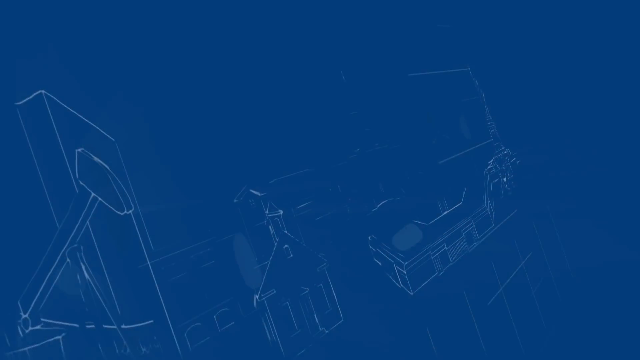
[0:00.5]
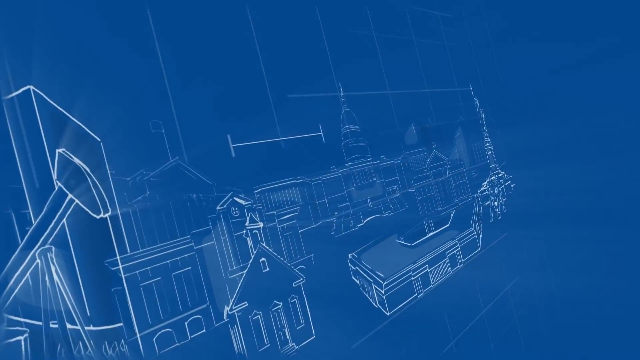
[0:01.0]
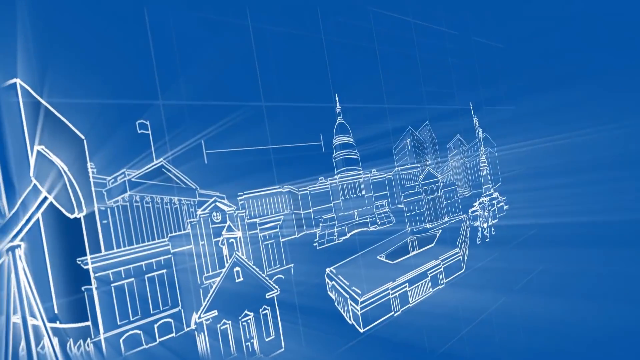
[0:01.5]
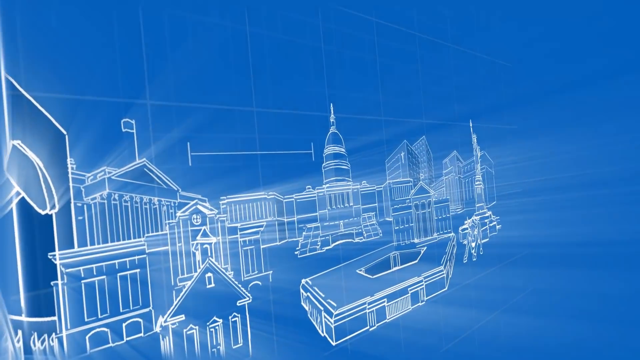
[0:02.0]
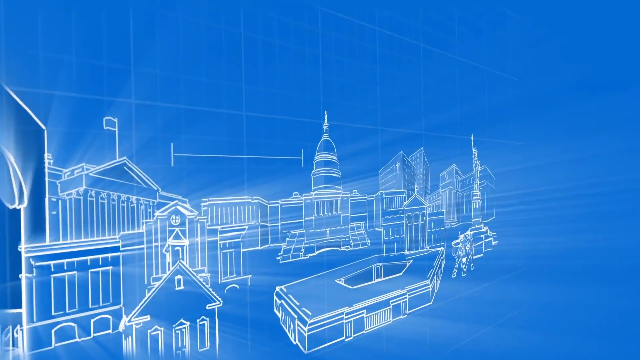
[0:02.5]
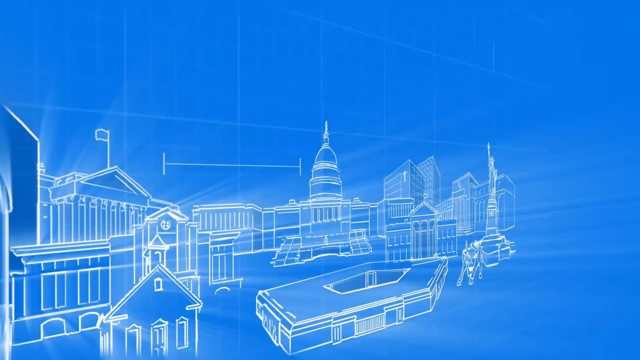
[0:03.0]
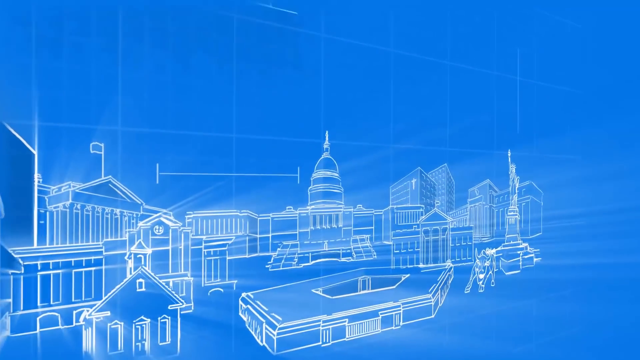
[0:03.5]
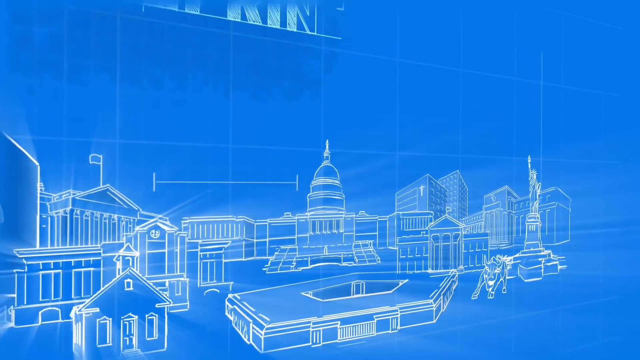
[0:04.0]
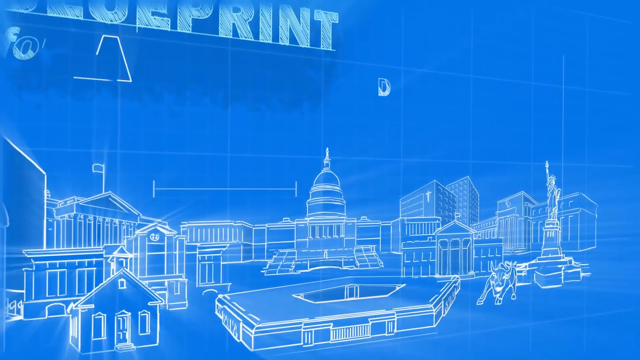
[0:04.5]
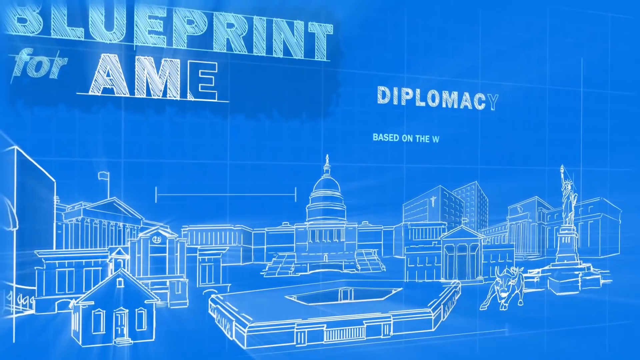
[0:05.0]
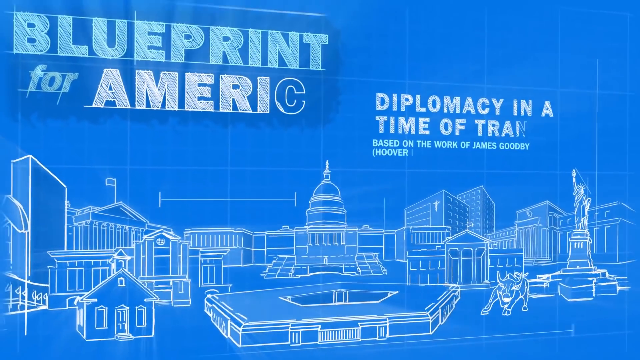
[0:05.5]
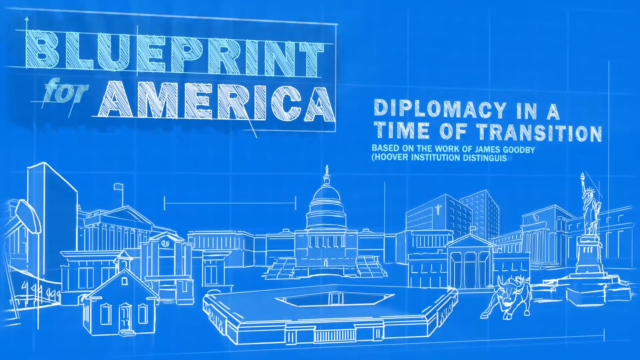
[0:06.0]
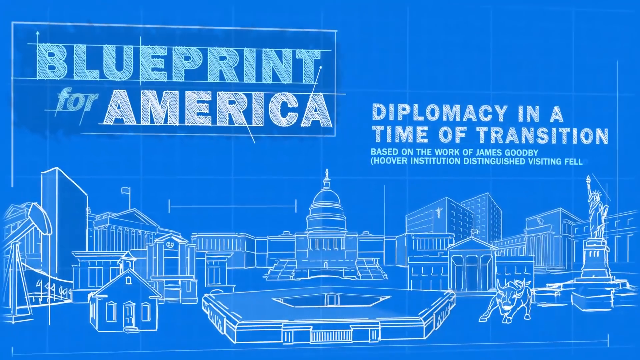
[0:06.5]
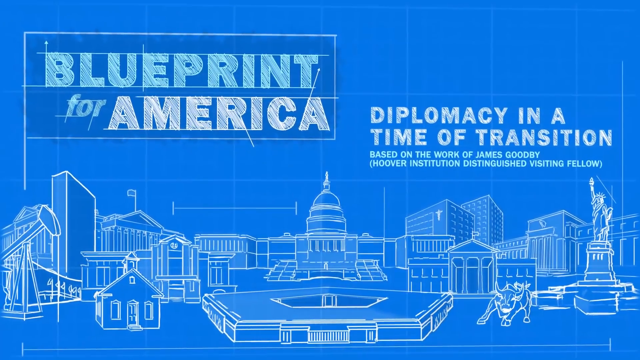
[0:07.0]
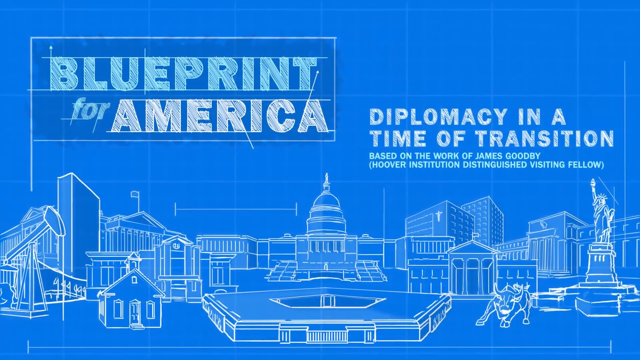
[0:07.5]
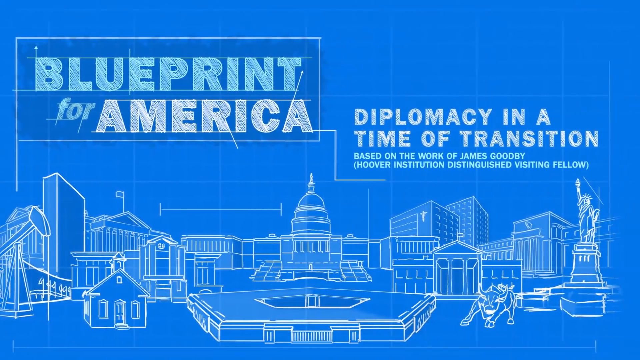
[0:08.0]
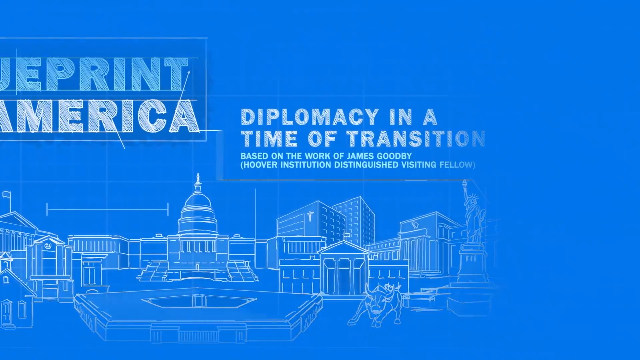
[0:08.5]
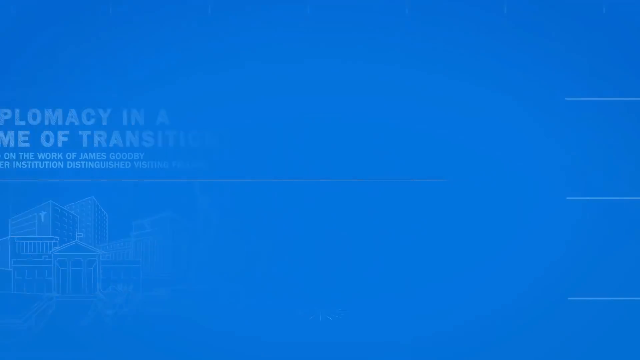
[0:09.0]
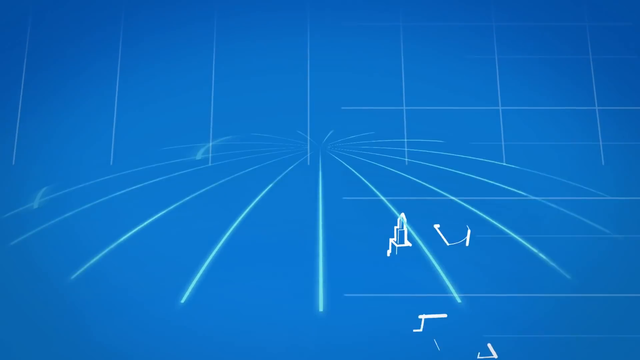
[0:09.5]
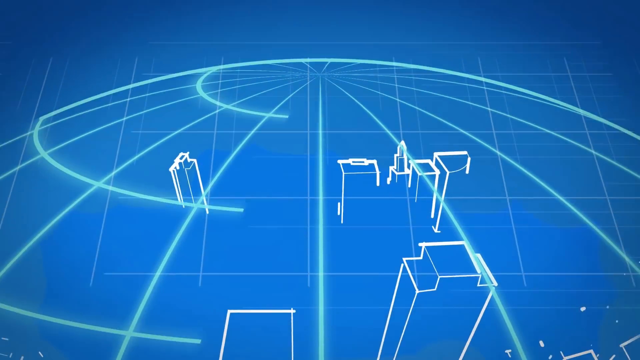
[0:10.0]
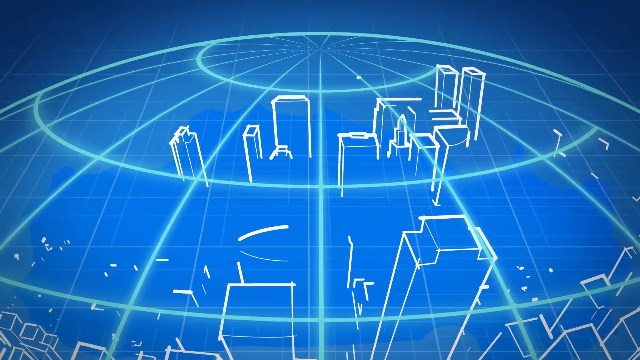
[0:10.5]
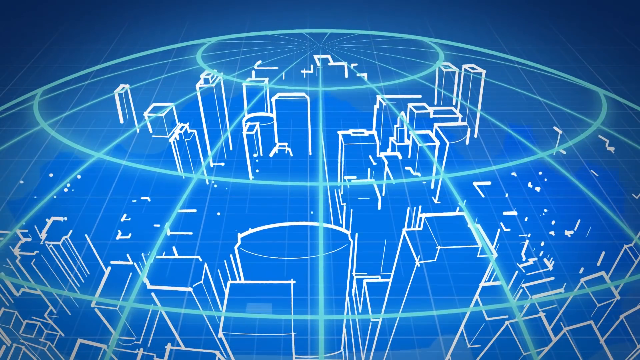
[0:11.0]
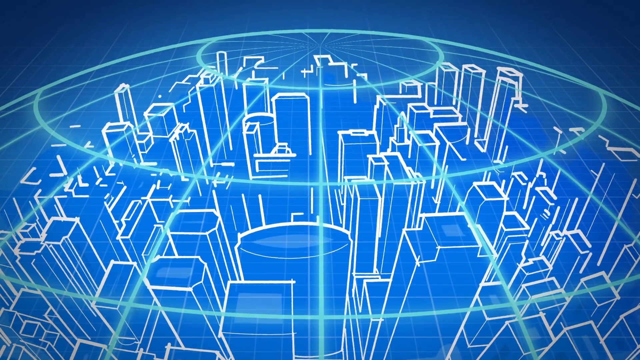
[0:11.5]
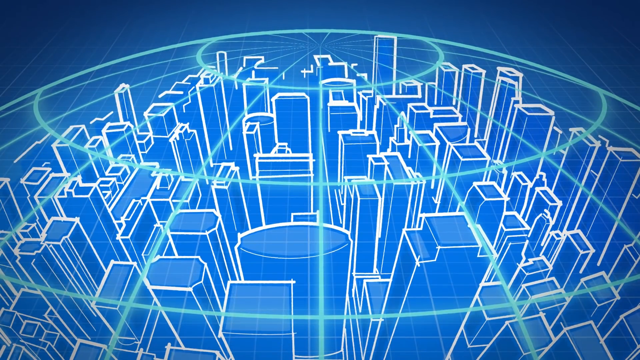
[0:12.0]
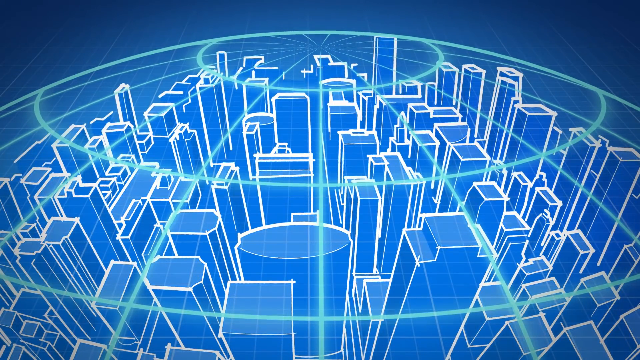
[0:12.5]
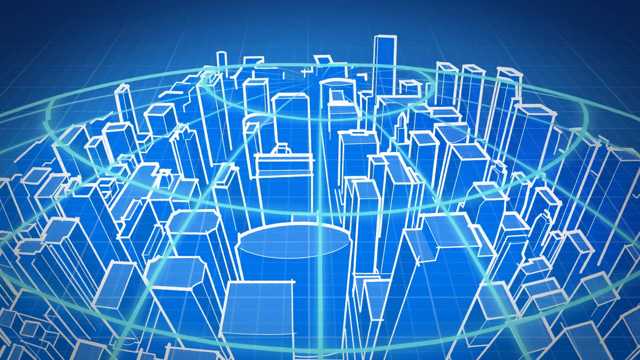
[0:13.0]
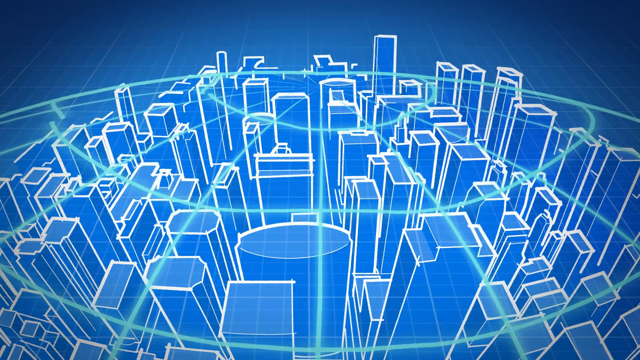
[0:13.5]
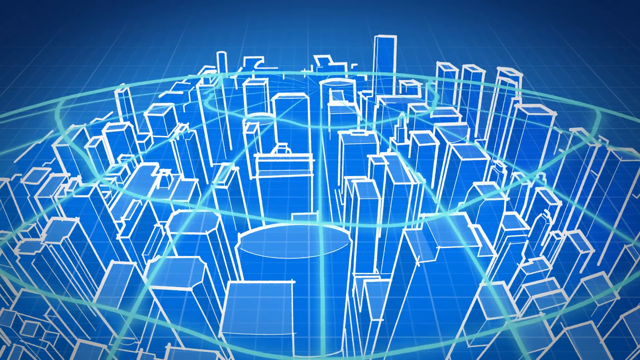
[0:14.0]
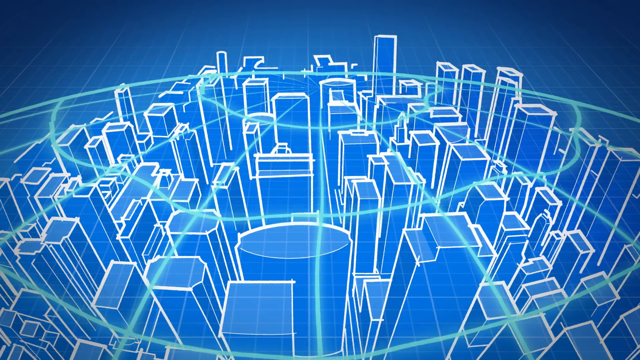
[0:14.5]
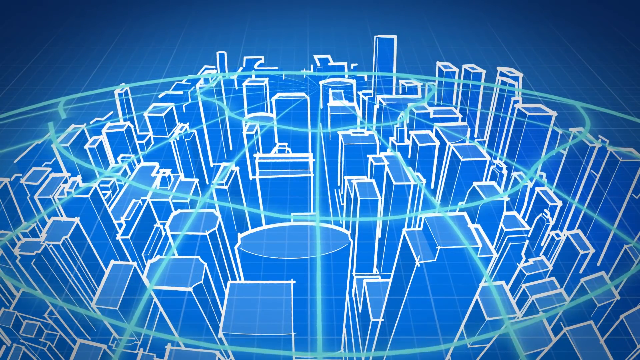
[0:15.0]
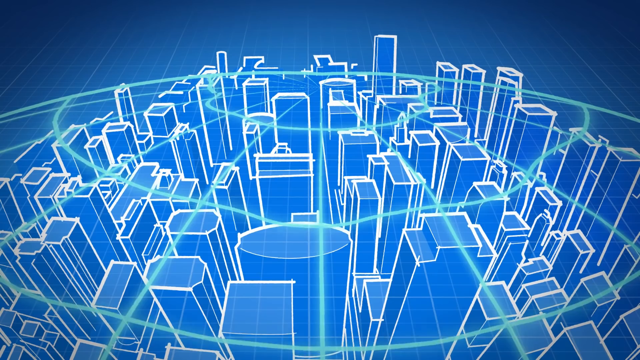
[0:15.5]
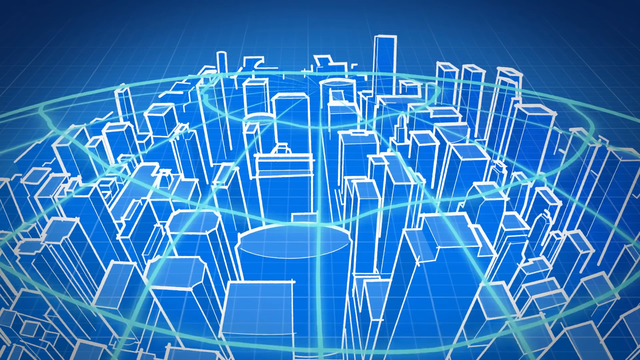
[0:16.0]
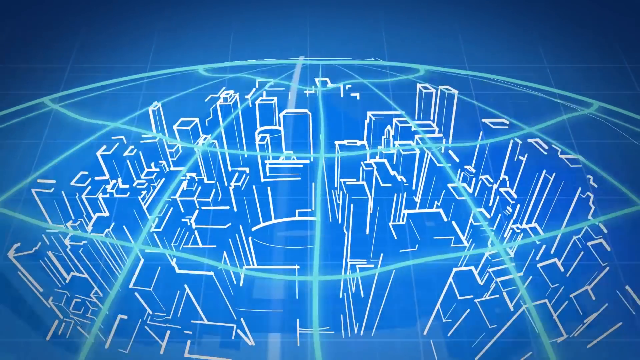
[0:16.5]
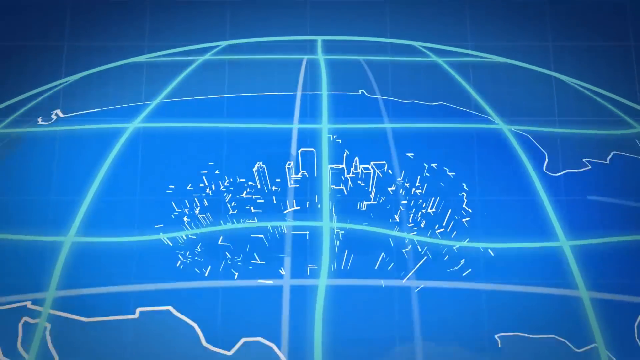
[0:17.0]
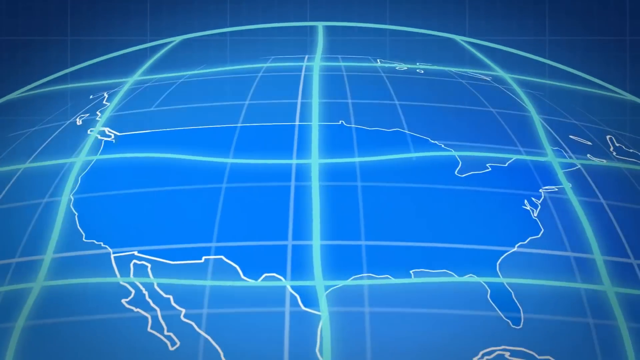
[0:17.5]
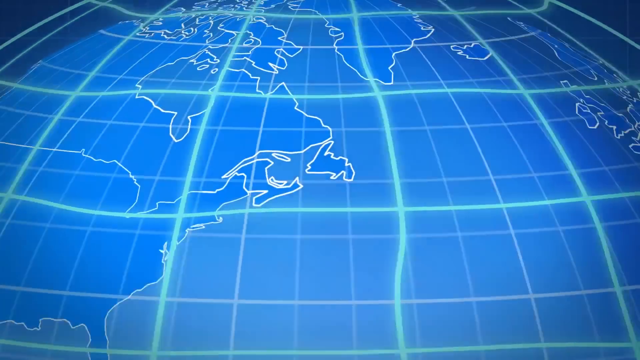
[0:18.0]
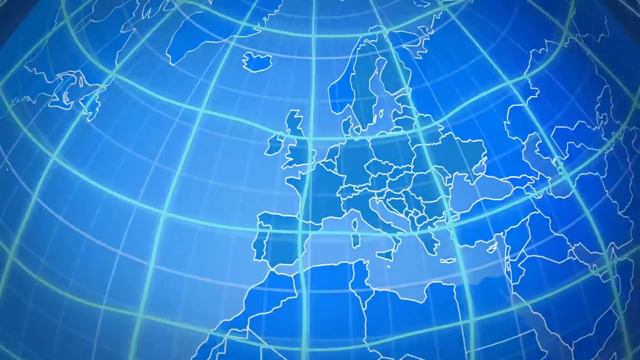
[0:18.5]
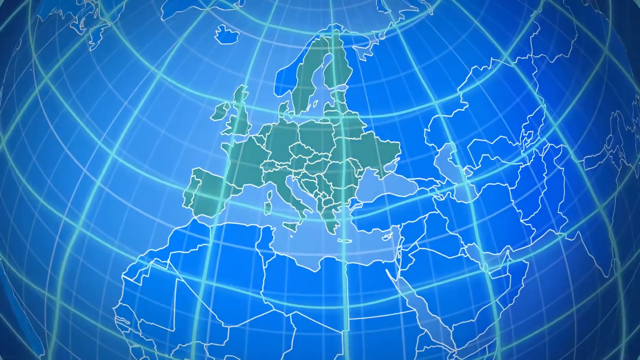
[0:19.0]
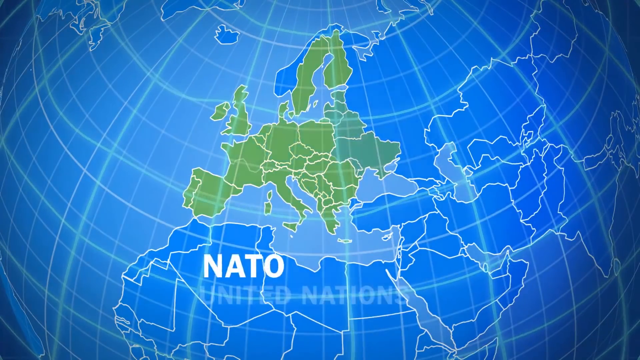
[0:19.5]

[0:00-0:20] A blueprint appears with the words "blueprint for America," followed by more graphics: a blueprint of the world and the text "NATO." The word "Democracy" or "Diplomacy" possibly appears as well. The colours are different shades of dark blue and white.